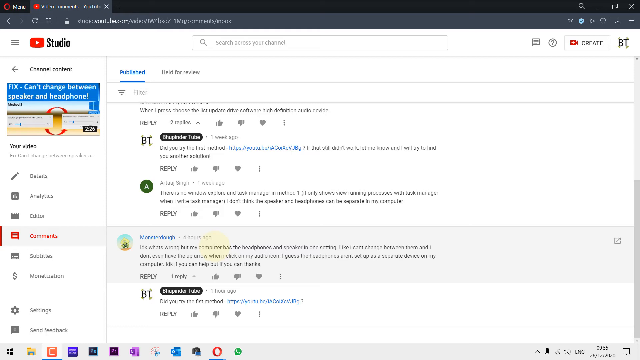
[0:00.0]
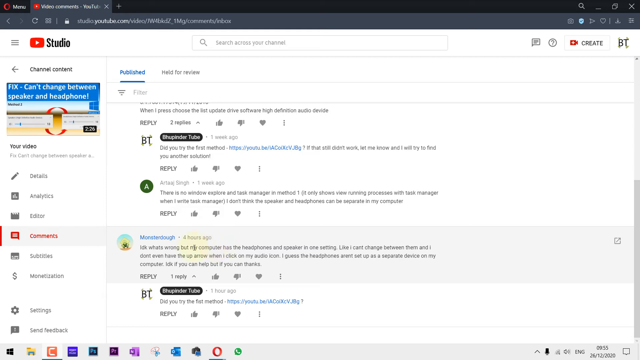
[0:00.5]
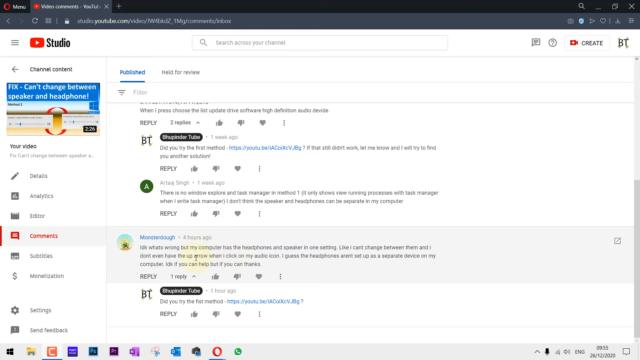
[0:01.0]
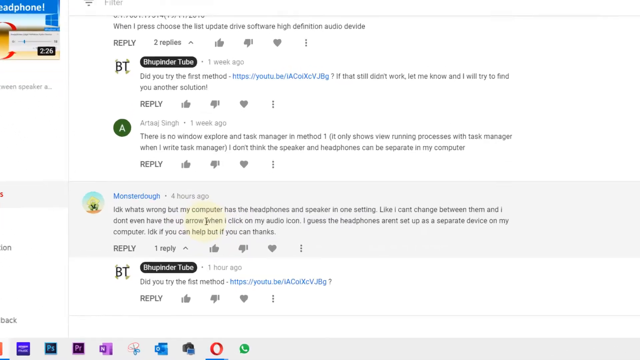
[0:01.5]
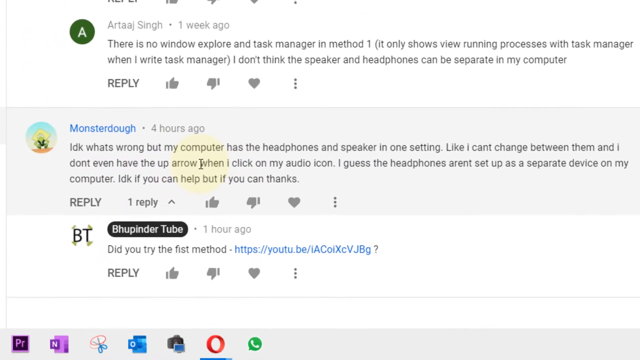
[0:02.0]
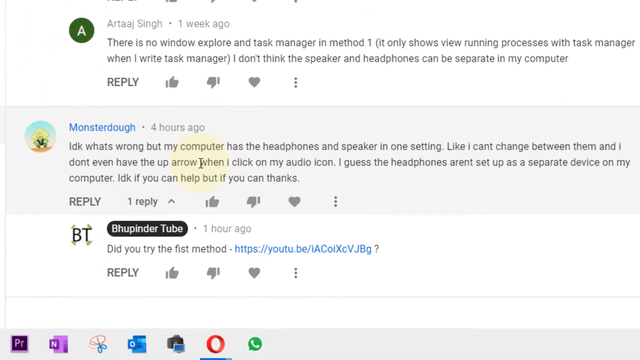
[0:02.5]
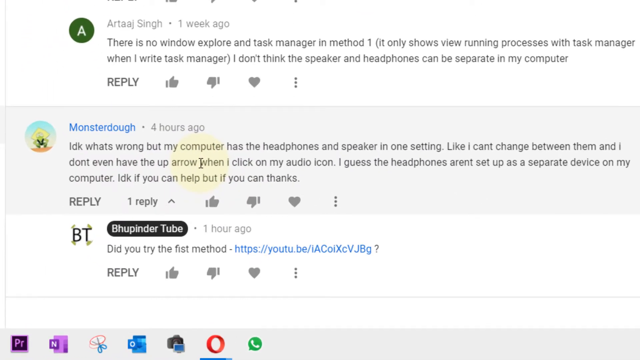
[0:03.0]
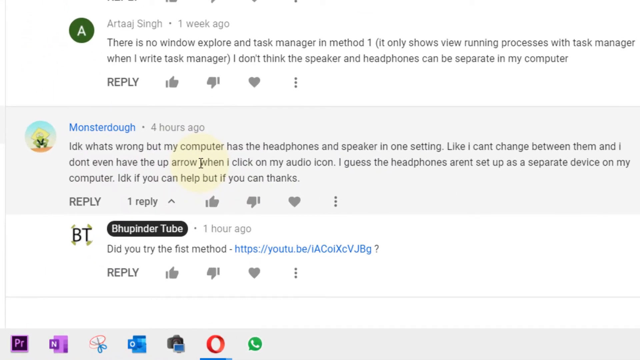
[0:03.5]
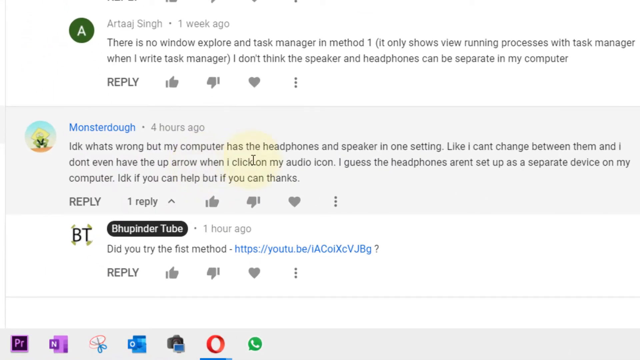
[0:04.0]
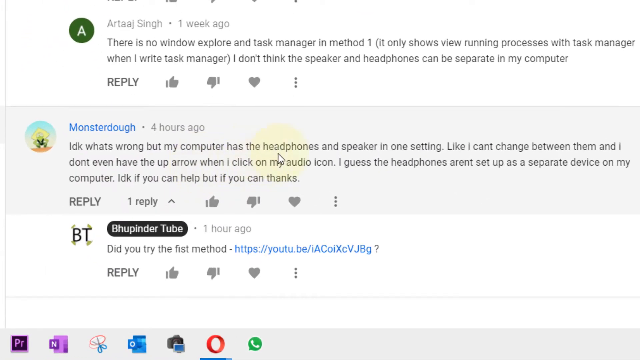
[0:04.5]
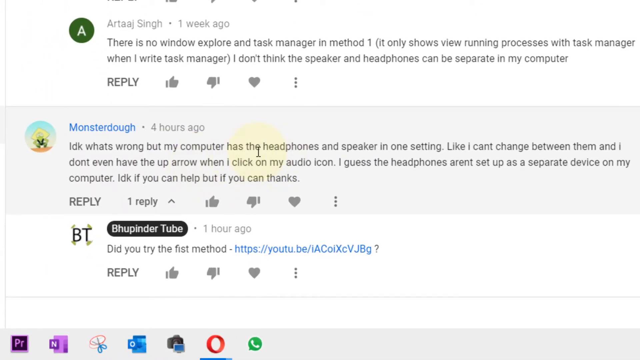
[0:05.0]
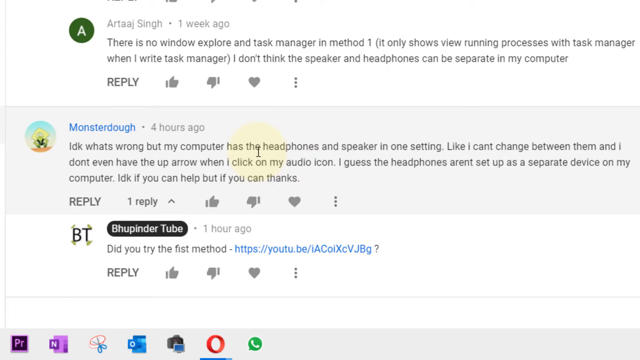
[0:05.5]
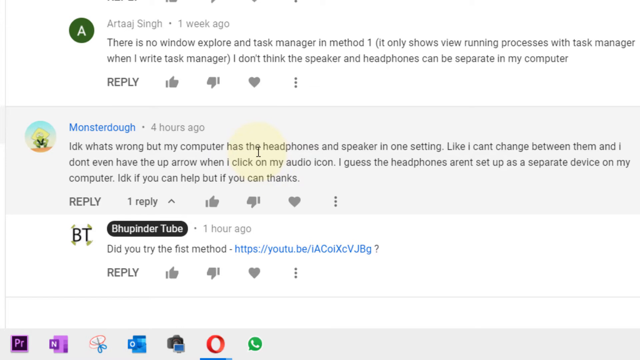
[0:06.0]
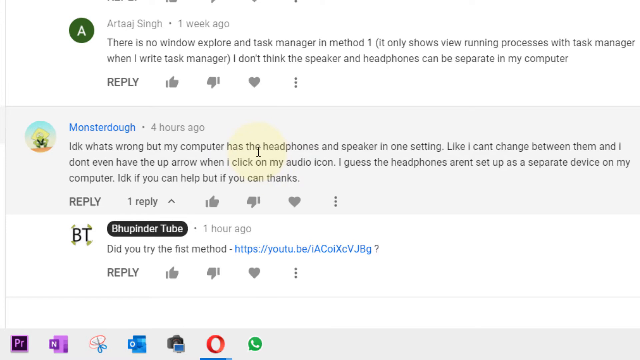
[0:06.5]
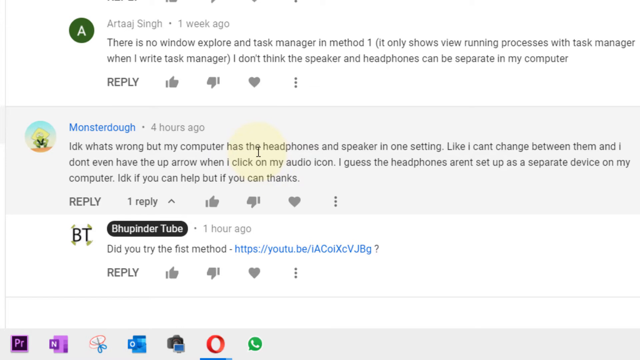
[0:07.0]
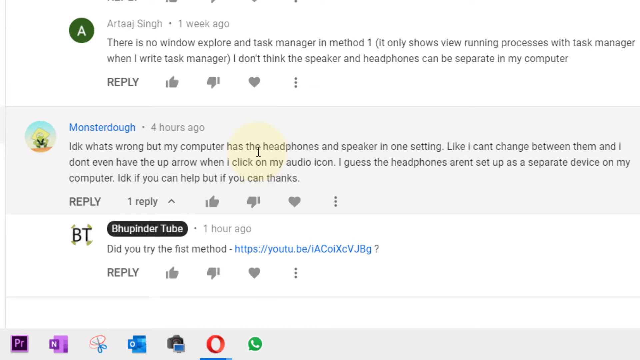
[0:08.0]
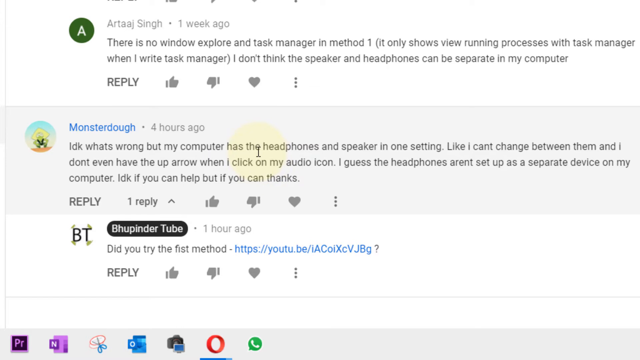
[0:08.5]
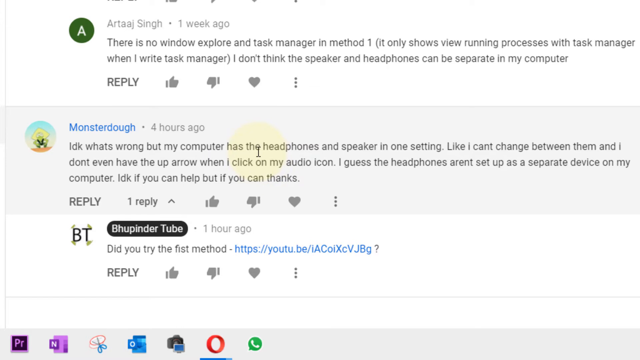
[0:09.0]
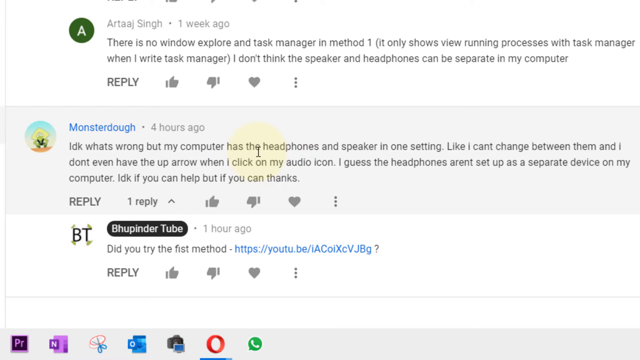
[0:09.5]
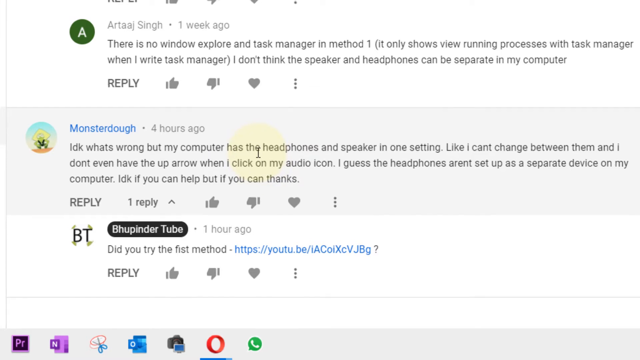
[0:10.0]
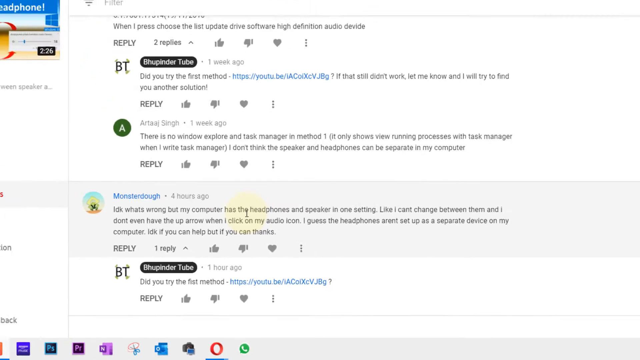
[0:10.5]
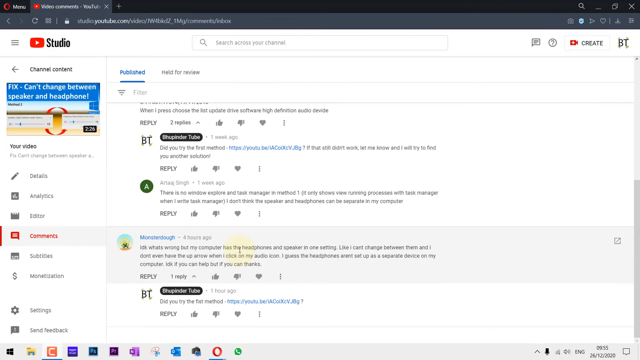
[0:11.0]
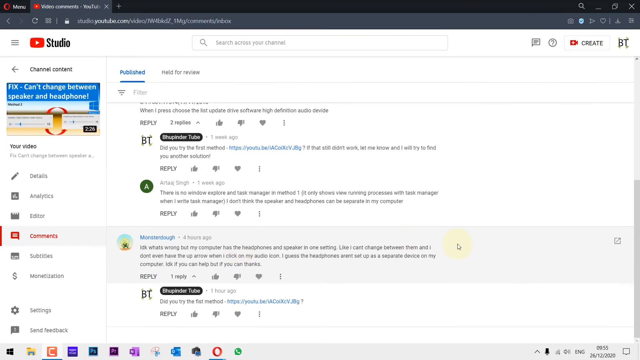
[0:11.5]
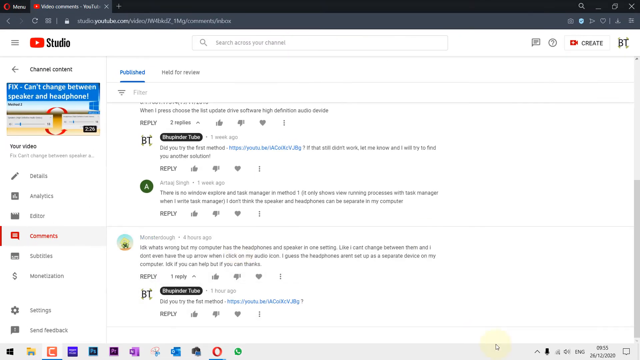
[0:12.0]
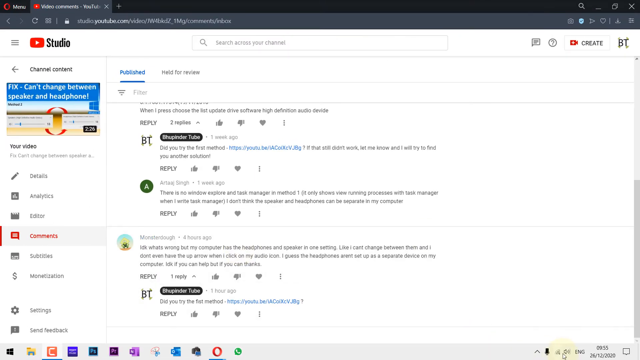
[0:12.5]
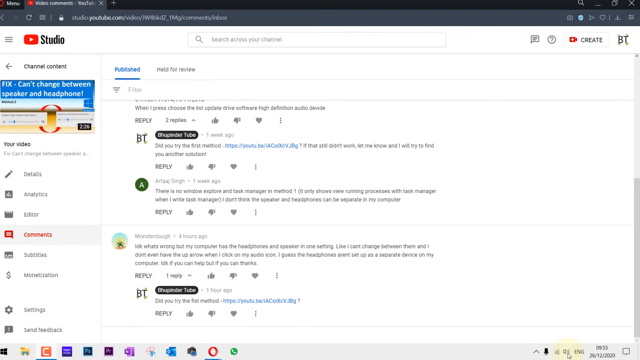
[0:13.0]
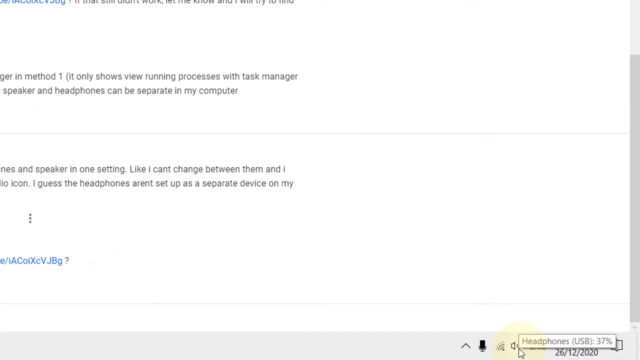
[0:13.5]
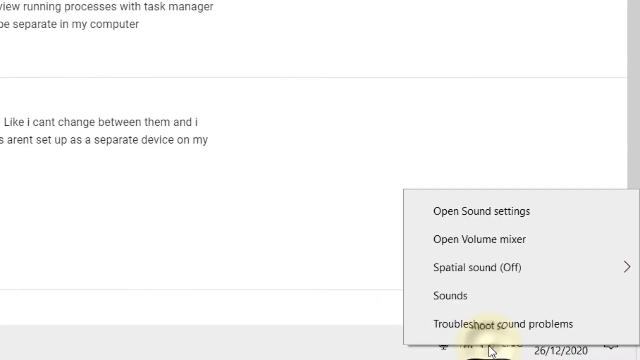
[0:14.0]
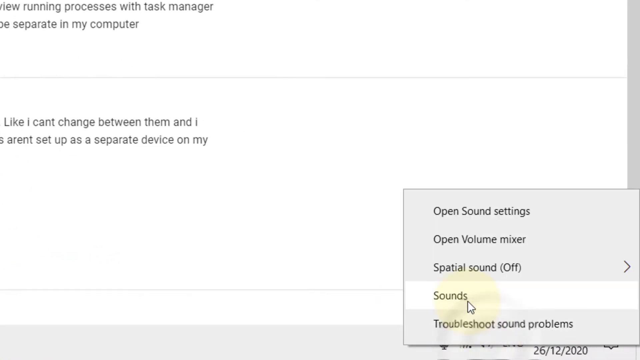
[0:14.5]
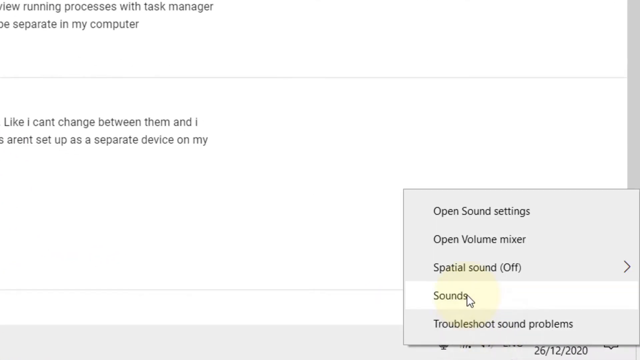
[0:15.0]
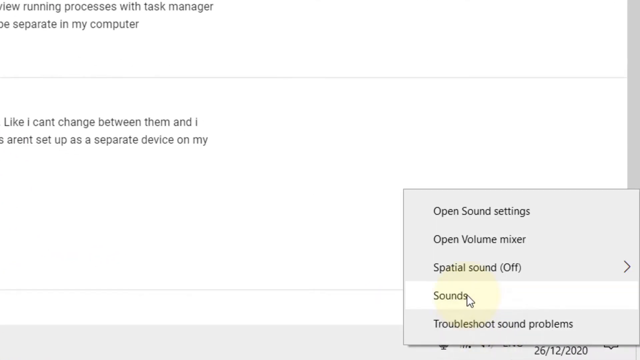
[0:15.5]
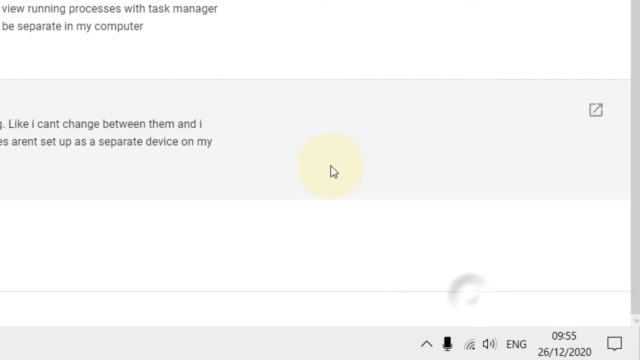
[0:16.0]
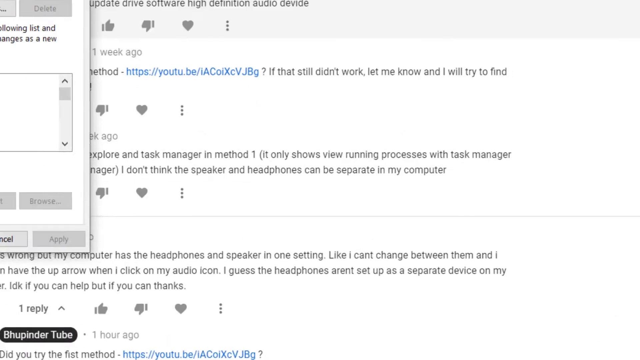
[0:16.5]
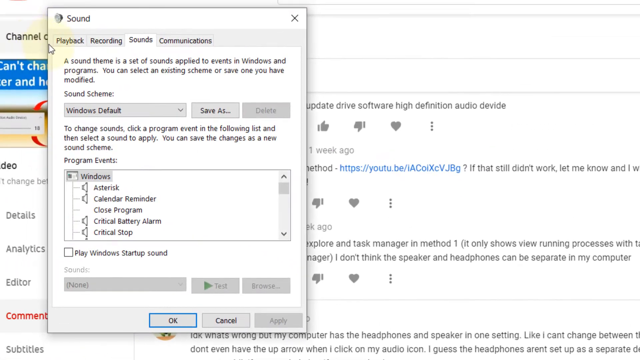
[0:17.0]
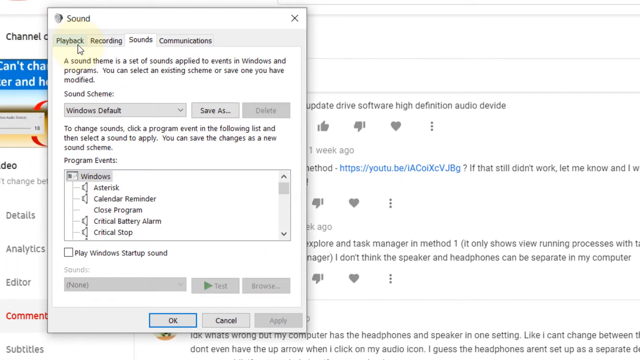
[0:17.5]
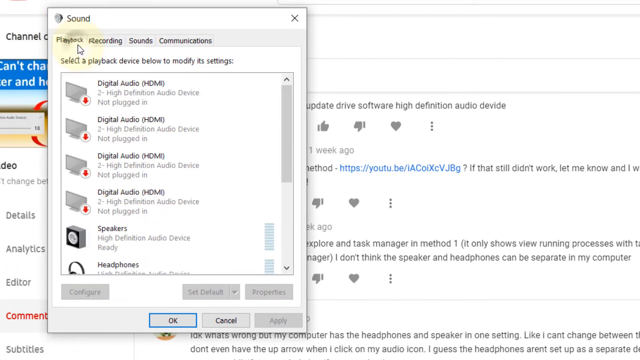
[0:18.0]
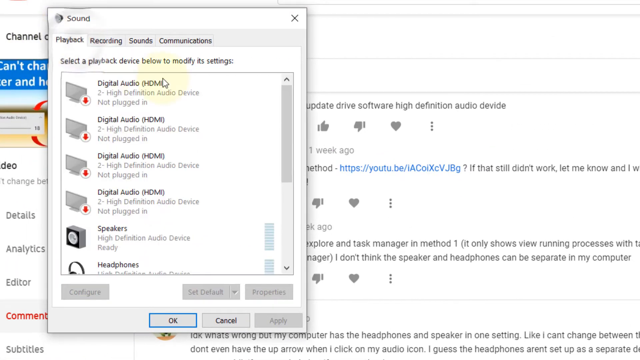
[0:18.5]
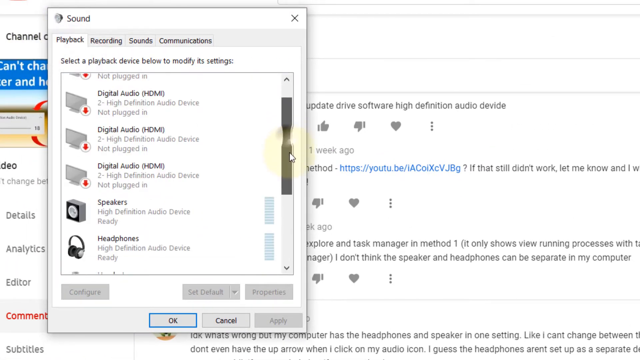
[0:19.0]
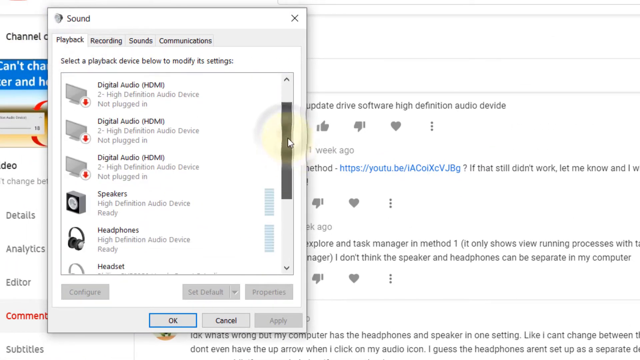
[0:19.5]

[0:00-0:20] A YouTube page is shown, with a zoomed-in comment from MonsterDough that reads: "I don't know what's wrong but my computer has the headphones and speaker in one setting, like I can't change between them and I don't even have the up arrow when I click on my audio icon" and "the headphones aren't set up as separate devices on my computer, I don't know if you can help me, if you can, thanks." Below the text are a reply icon and thumbs up, thumbs down and heart options. Below that, blue writing says "did you try the first method", followed by a link written "HTTPS YouTube". Below that are different options to pick from, including Microsoft and other things. The view then zooms back, and a set of options including sounds is shown. Sound is chosen, and a playback option appears with a number of choices beneath it. An arrow shows where to press on the options, and after that Playback is opened, with a line of different playback devices listed below it.